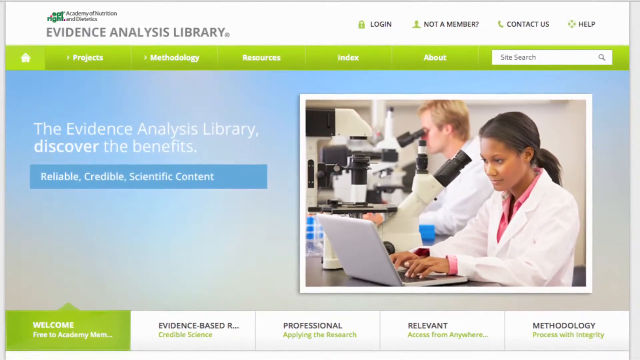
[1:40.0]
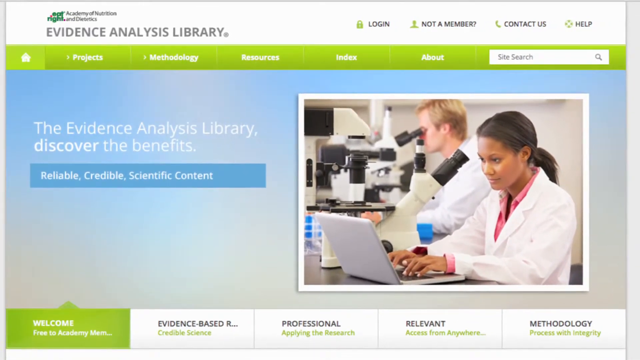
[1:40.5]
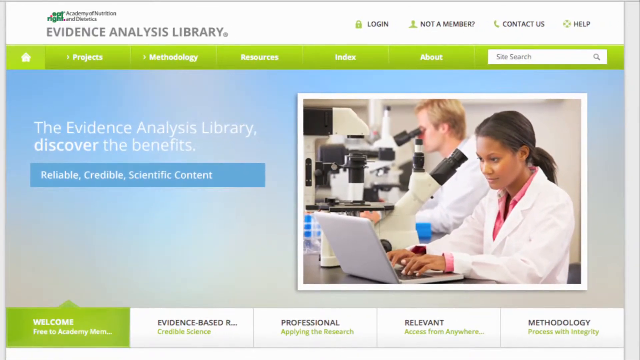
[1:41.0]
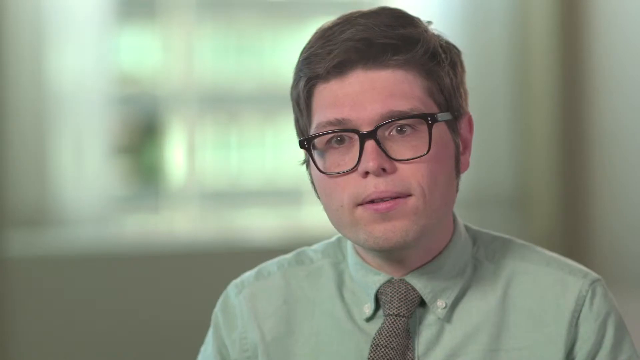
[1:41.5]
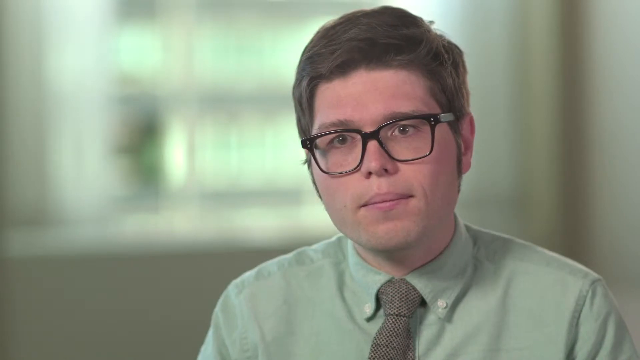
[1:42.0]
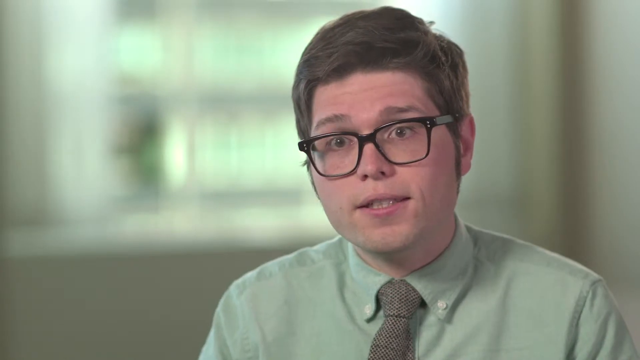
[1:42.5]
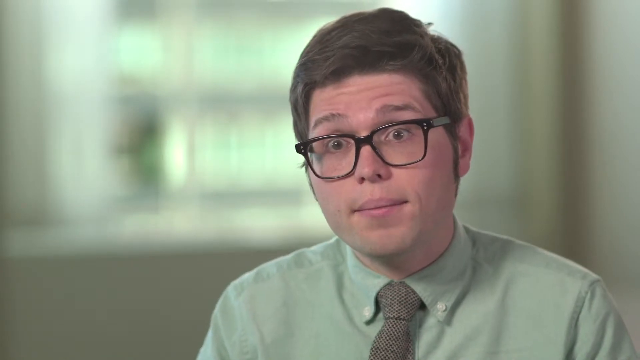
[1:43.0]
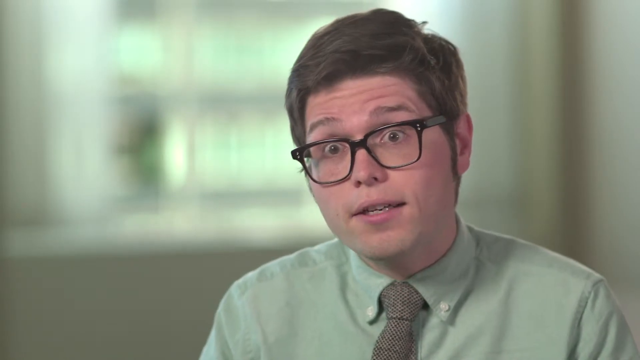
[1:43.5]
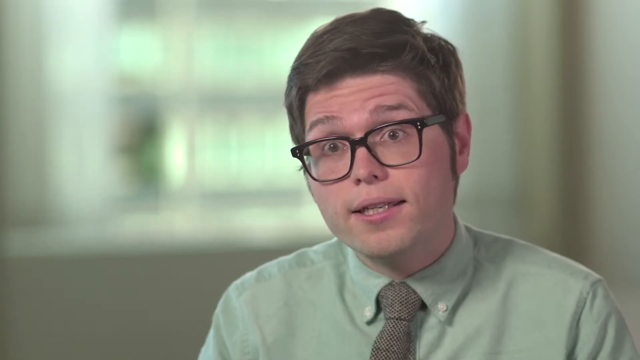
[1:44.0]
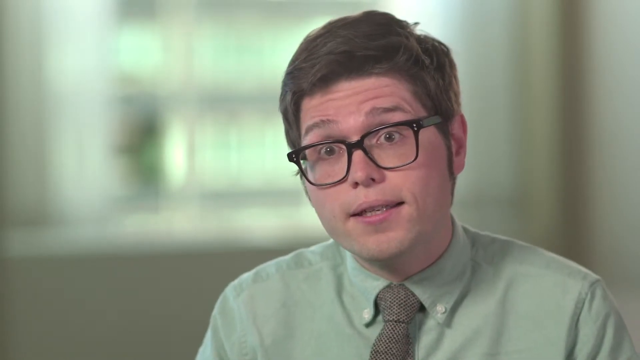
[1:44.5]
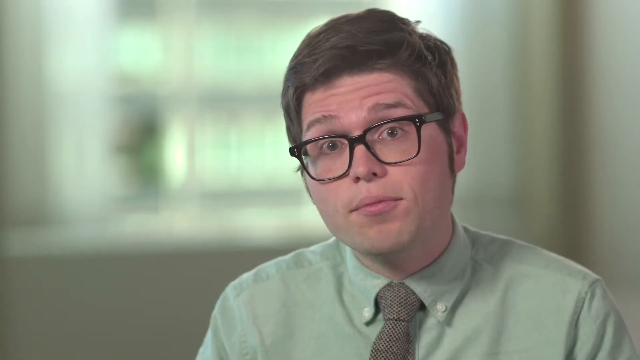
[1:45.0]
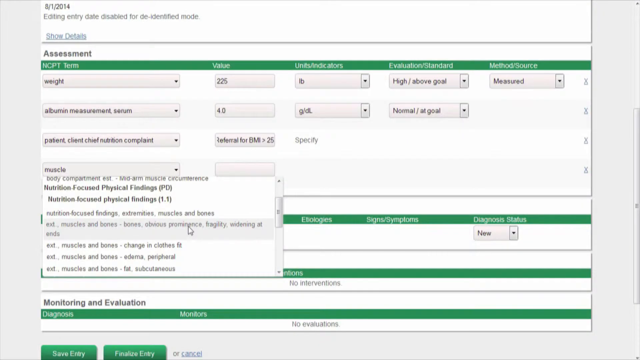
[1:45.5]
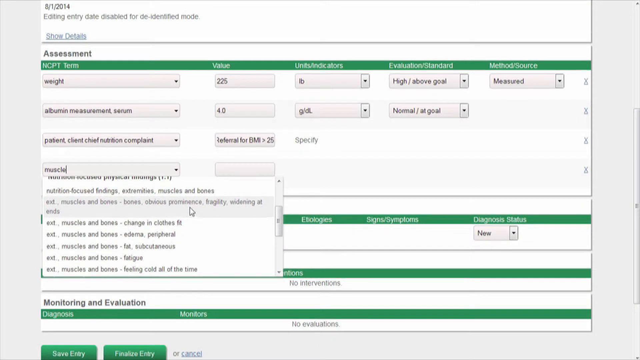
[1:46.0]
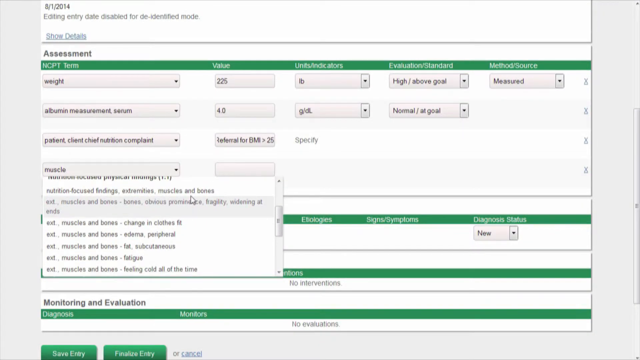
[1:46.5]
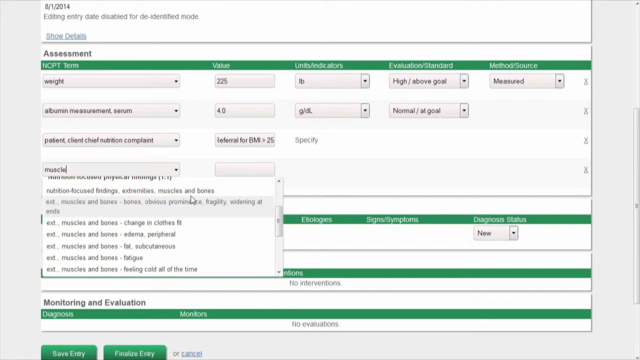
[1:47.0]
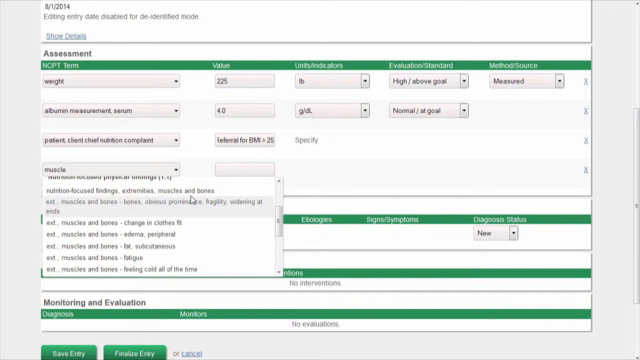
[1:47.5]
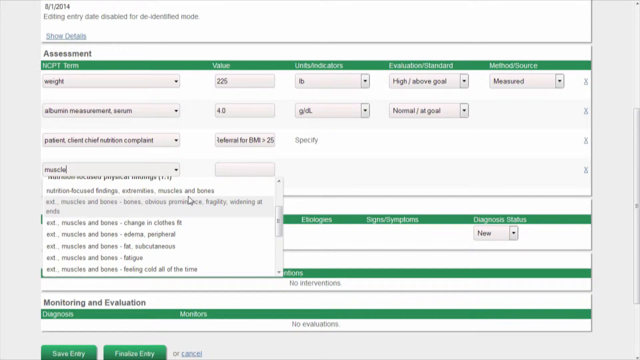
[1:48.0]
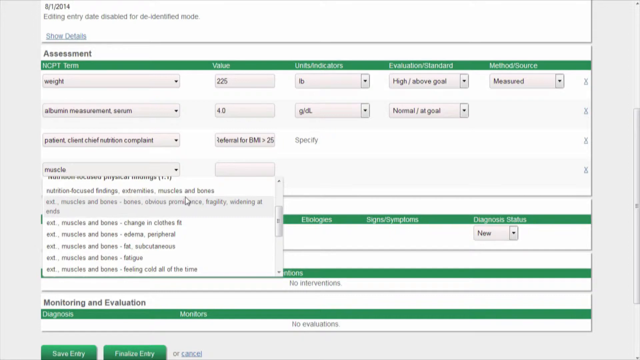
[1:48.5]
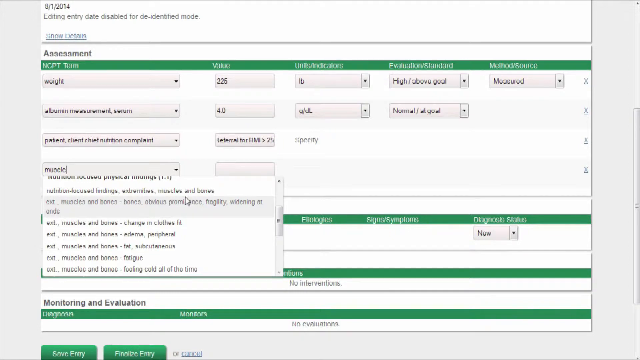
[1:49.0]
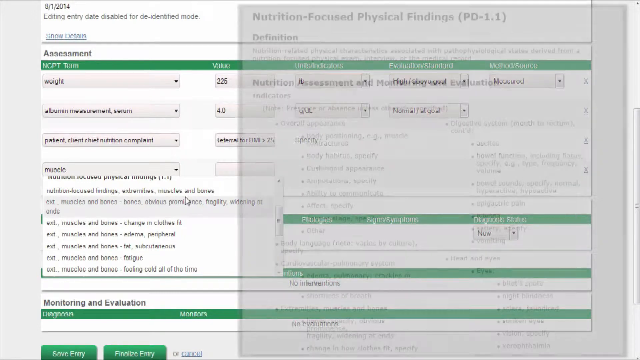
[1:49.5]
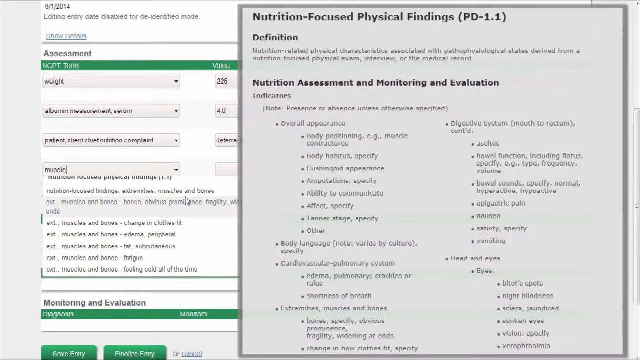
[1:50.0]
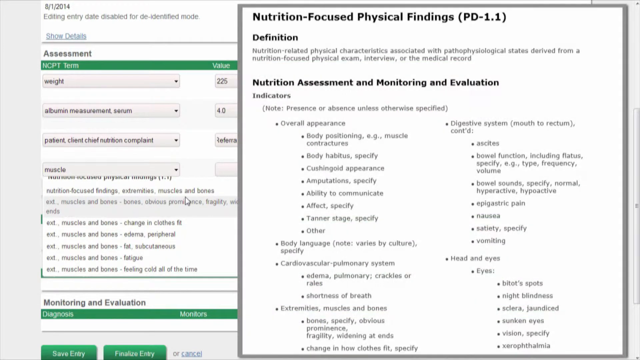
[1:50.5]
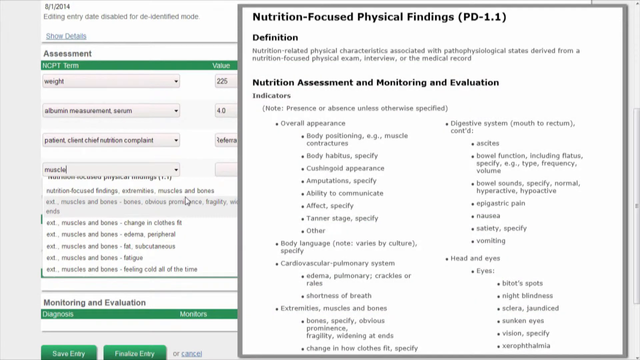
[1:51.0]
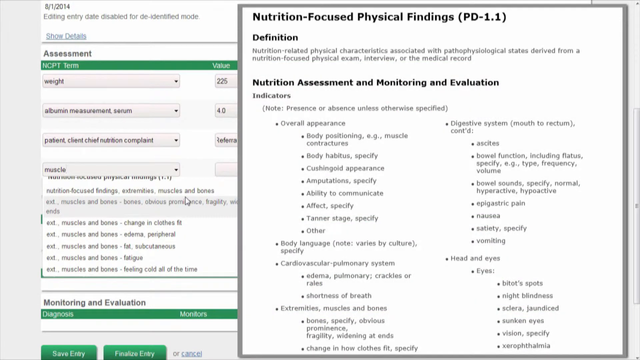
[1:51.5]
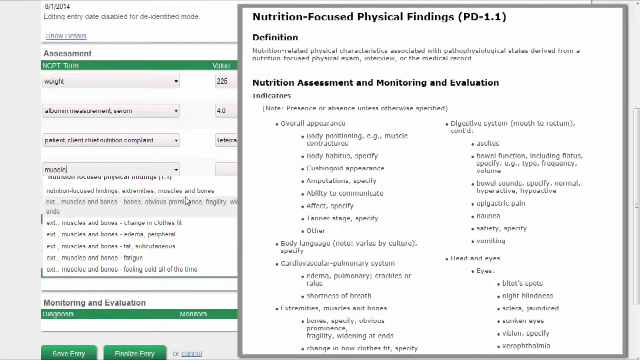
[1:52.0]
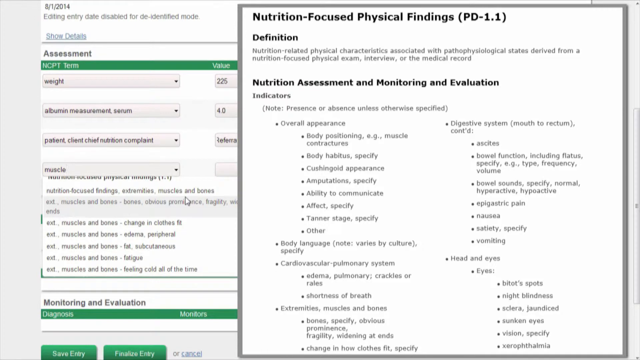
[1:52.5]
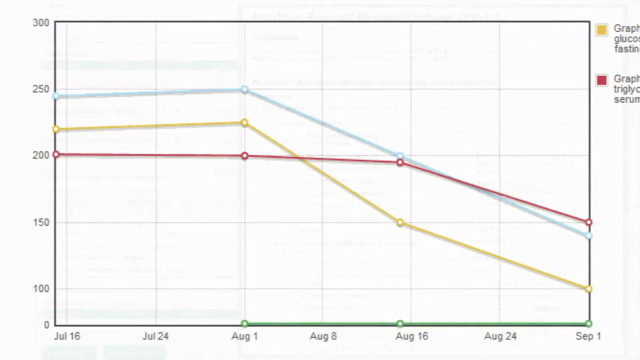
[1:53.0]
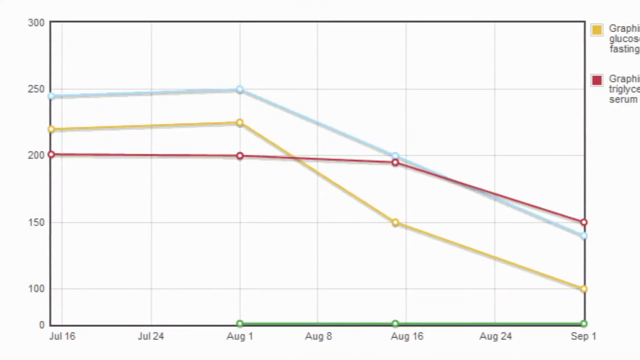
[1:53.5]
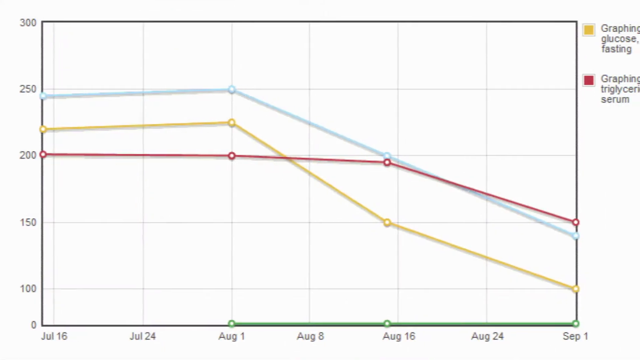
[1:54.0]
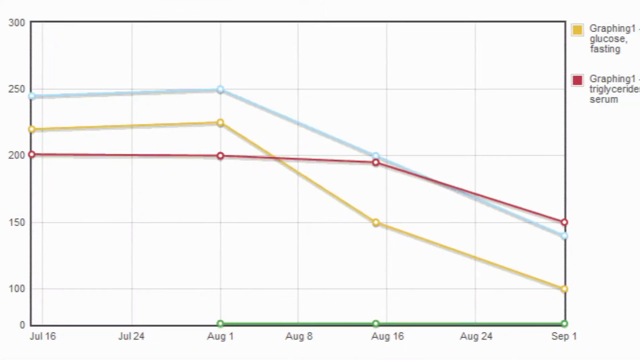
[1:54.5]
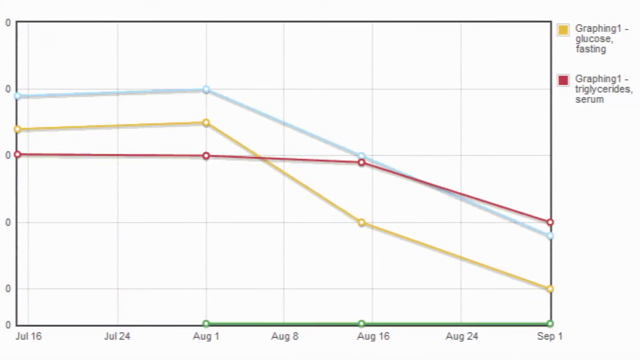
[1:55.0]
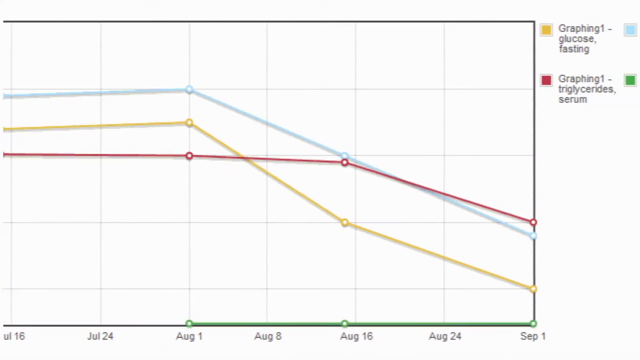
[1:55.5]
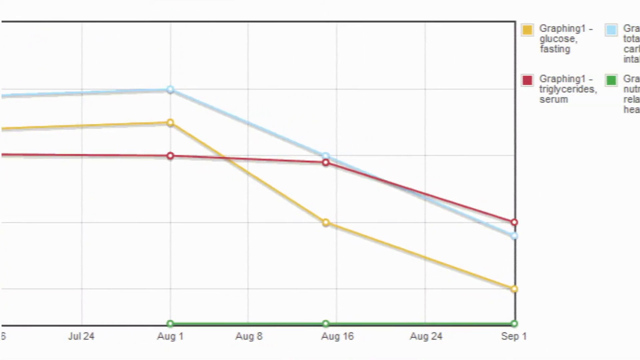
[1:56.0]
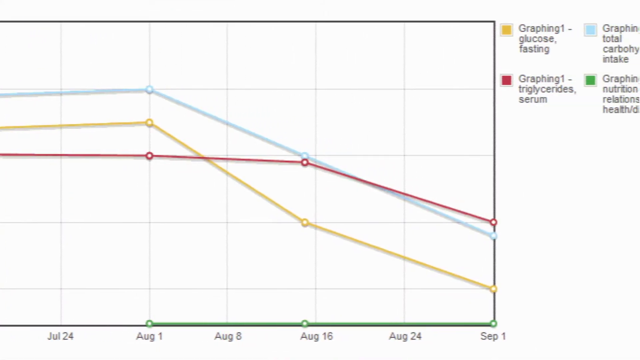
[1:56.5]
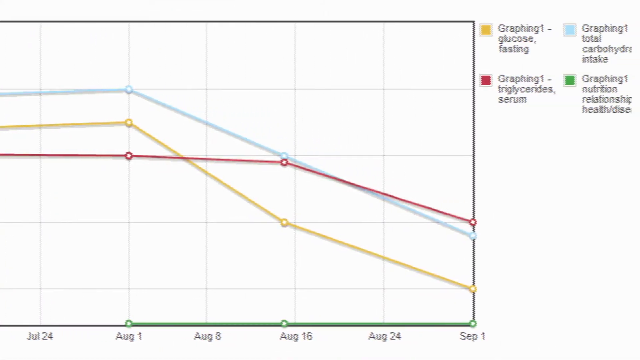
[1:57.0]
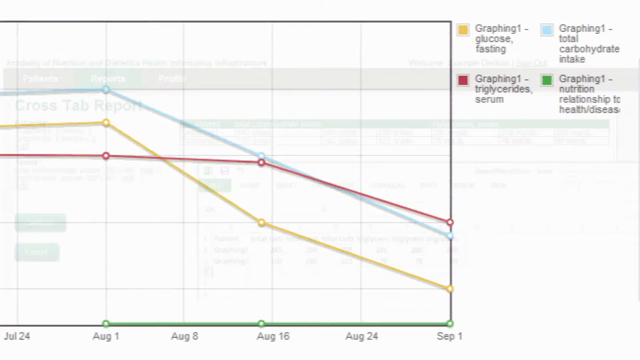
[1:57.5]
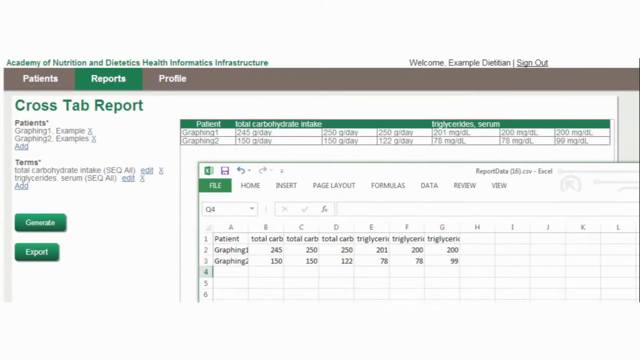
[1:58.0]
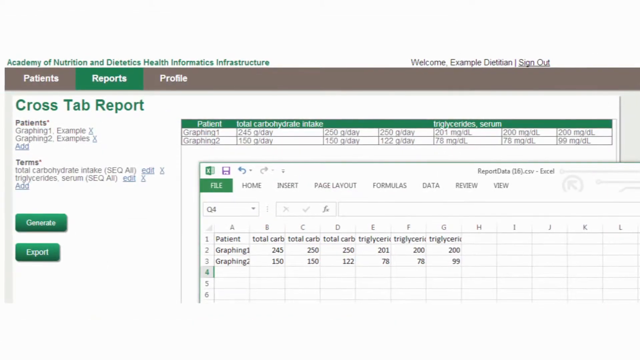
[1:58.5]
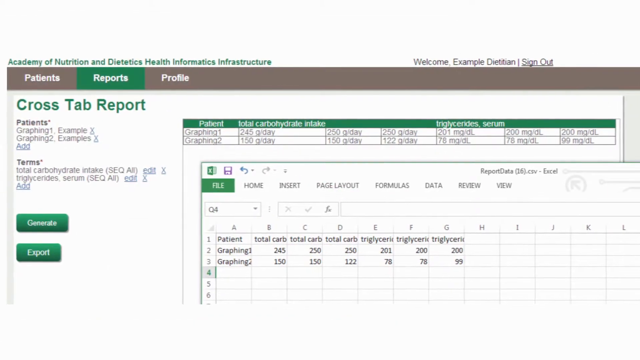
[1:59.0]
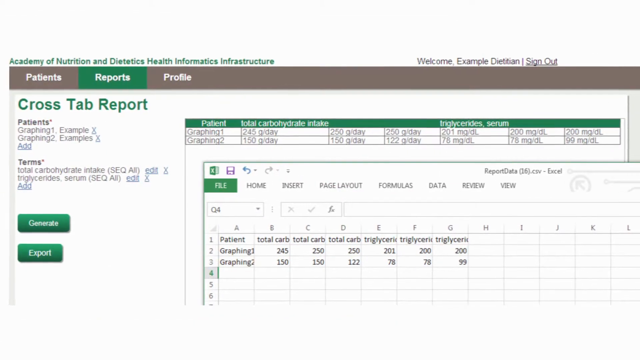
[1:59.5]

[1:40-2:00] A screen with a blue background, green, and then white at the very top shows the Evidence Analysis Library. On the right side is a picture of a laboratory with a young man and a young woman working: the young man looks through a microscope while the young woman types on a laptop computer. The video cuts to the young man with short dark hair, black glasses and long sideburns, speaking in the room. Then a form on the computer has a small inset that comes forward about nutrition-focused physical findings, covering nutritional assessment and monitoring and evaluation, and the whole form pops up. A graph follows, with blue, yellow and reddish-blue lines showing glucose, triglycerides and other parts of an examination. The video then goes to the crosstab report.